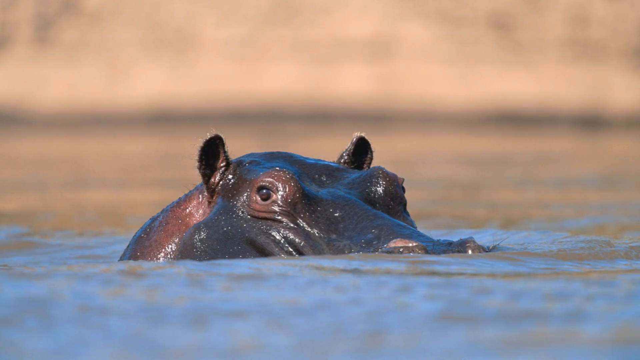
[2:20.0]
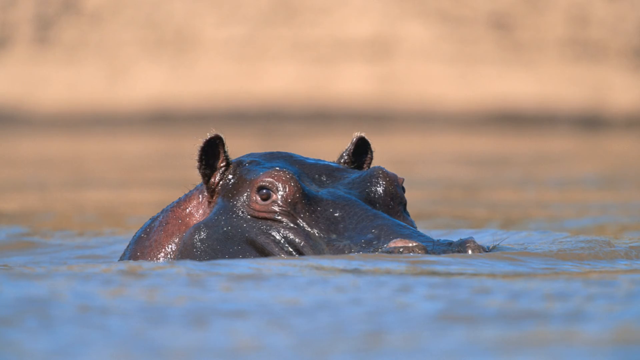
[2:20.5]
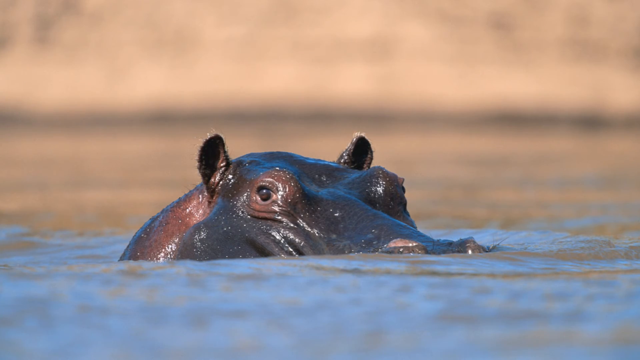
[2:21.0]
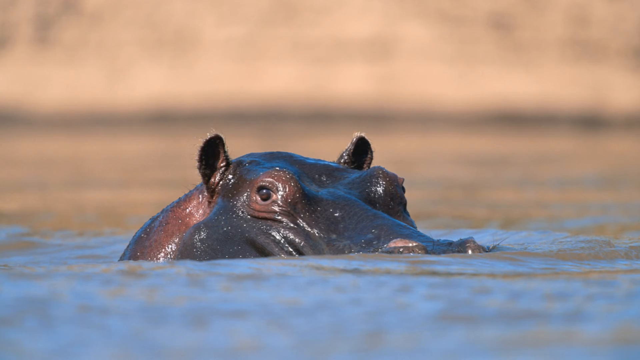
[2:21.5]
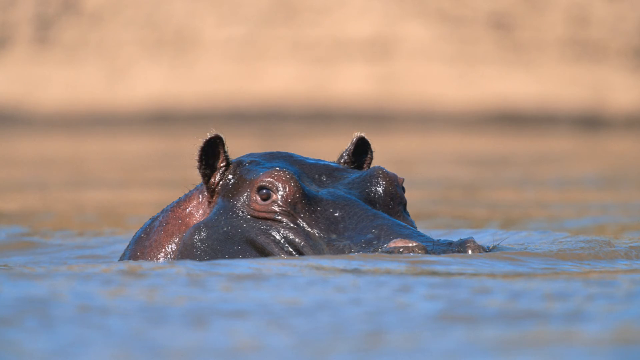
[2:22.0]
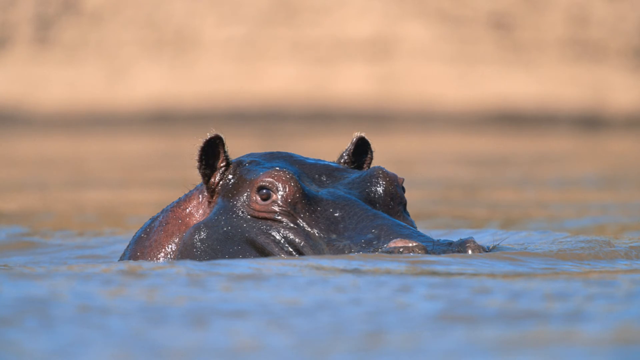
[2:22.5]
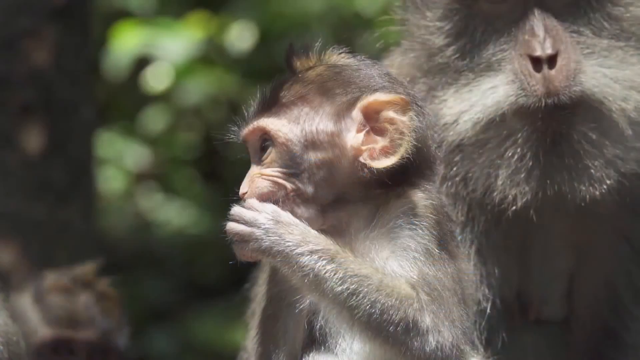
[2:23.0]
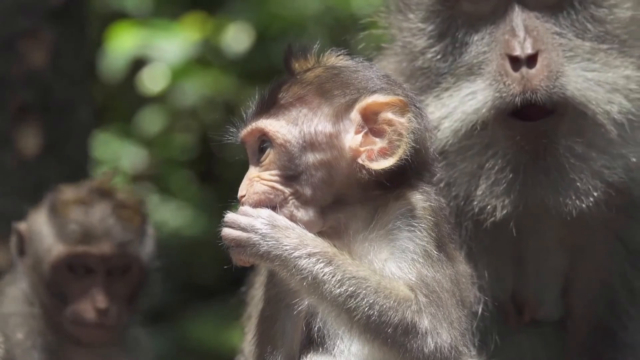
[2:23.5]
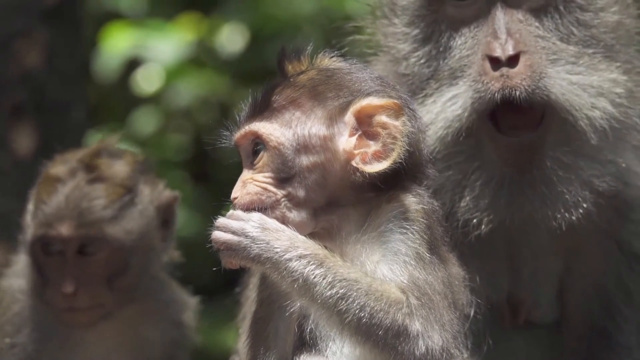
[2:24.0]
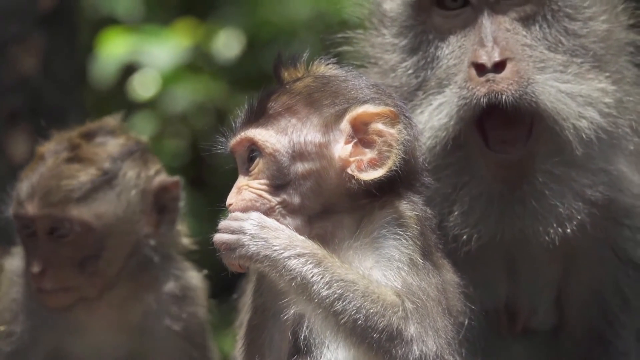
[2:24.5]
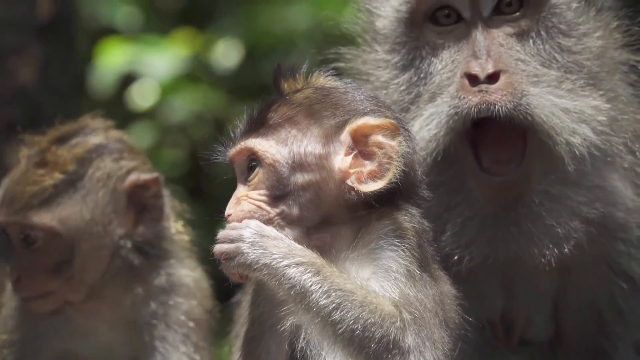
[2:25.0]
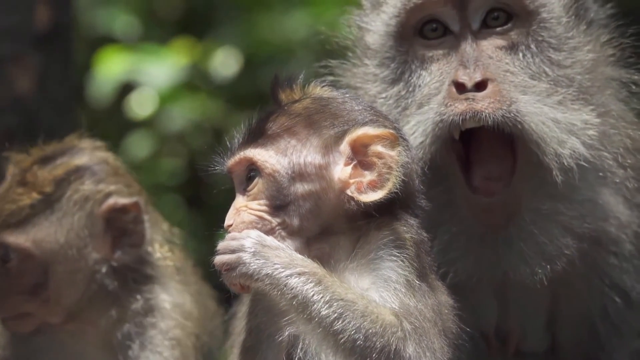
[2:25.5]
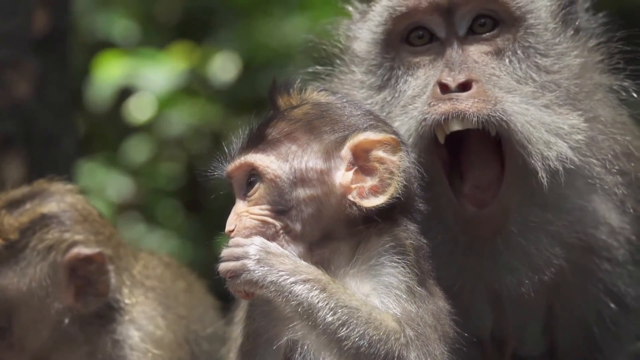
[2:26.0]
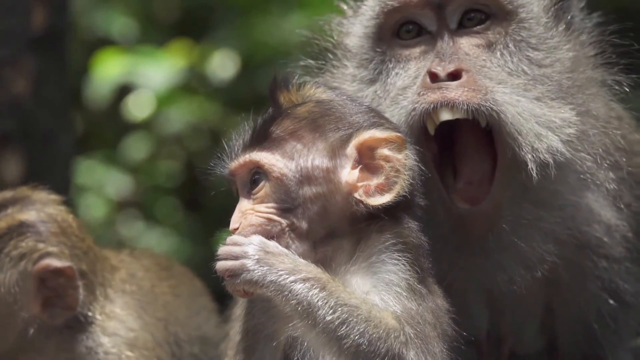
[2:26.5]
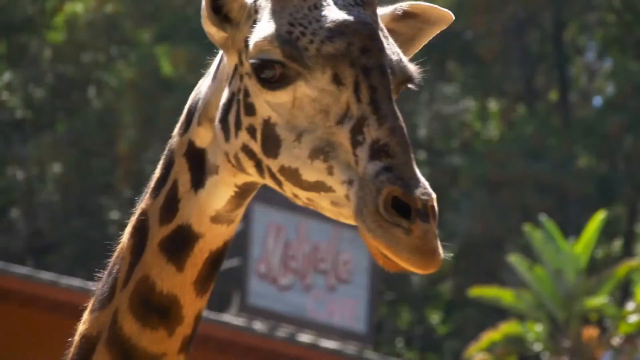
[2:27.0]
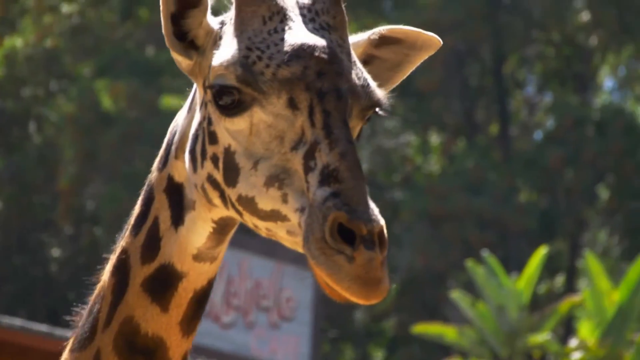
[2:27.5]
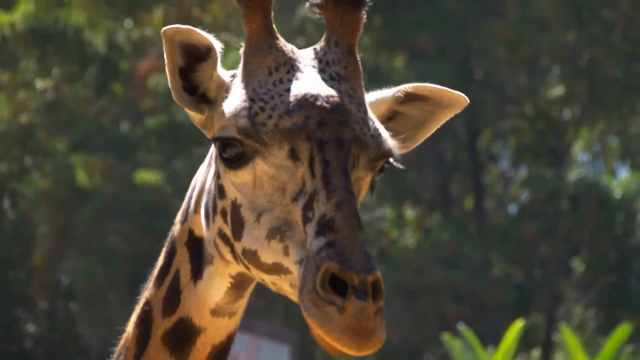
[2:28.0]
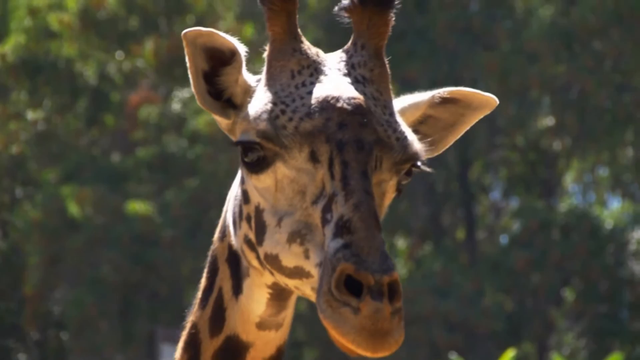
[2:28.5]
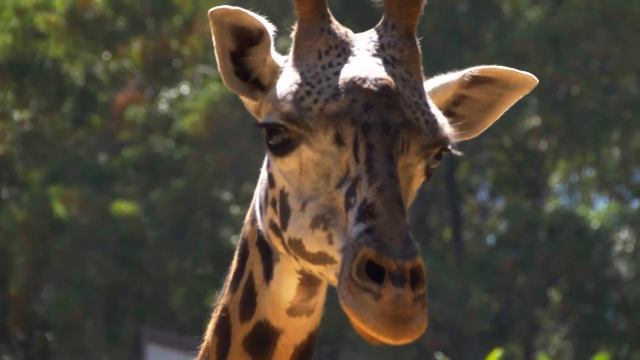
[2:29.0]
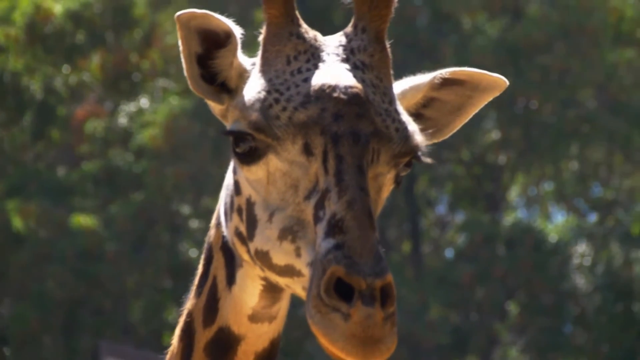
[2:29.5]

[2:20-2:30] Apparently three monkeys appear; one is either eating a fruit or yawning, and the mother is in the background. The monkeys seem to be in their natural habitat. The hippo appears to be looking out for something, probably on the riverbank, with only one eye visible and pointy ears. A giraffe, brown with dark brown patches, is at a zoo; a colorful board behind it shows that it is a zoo.